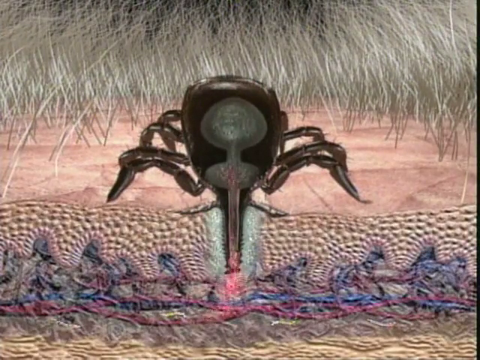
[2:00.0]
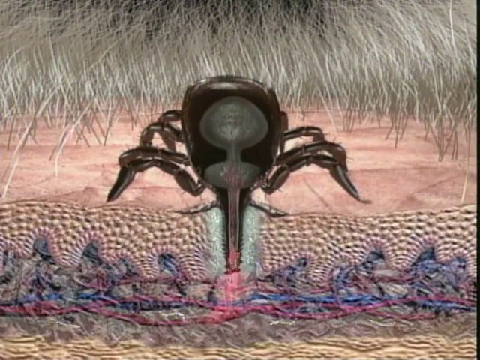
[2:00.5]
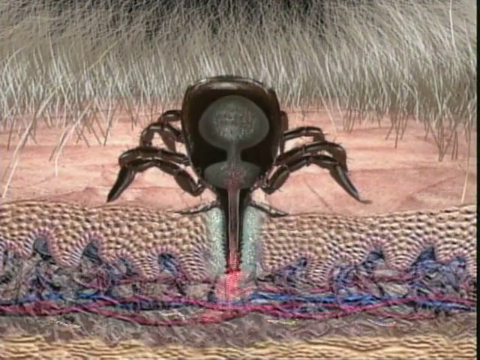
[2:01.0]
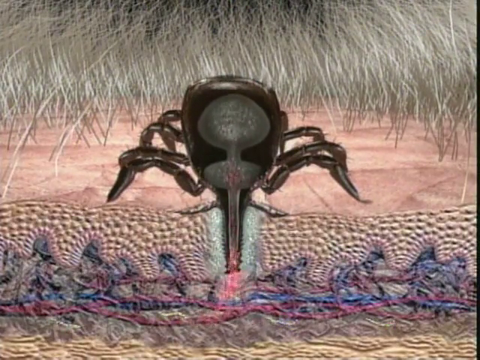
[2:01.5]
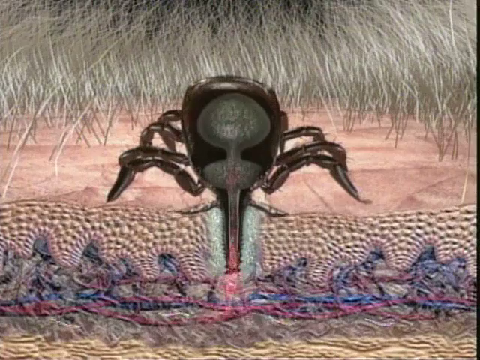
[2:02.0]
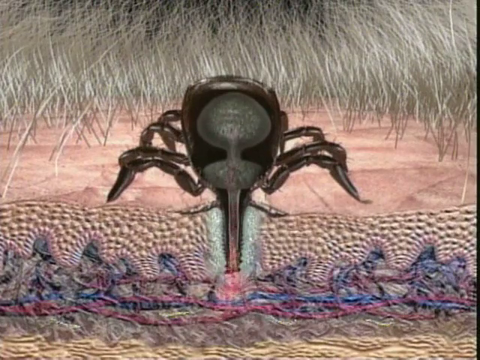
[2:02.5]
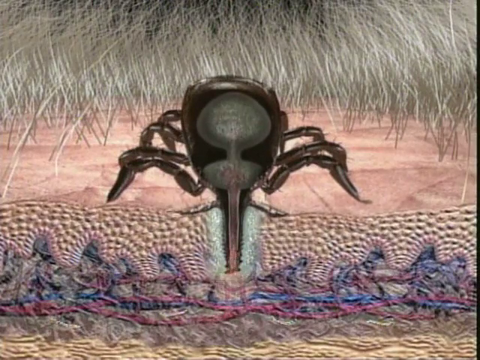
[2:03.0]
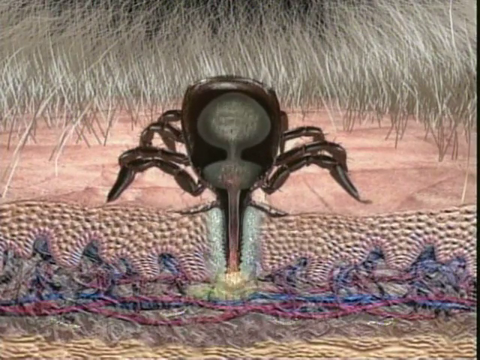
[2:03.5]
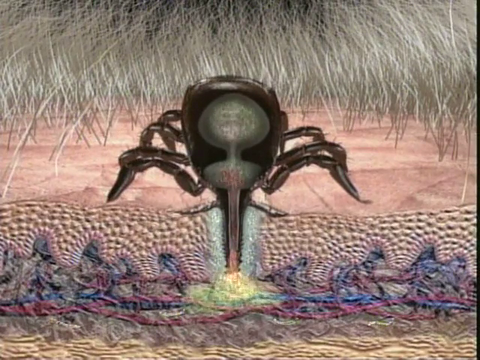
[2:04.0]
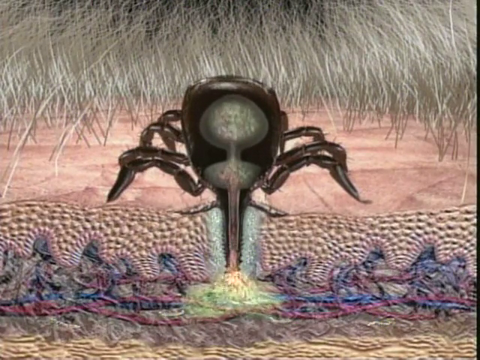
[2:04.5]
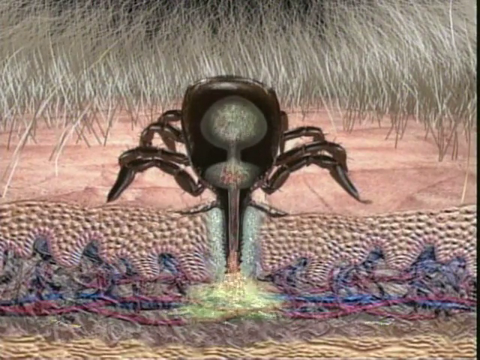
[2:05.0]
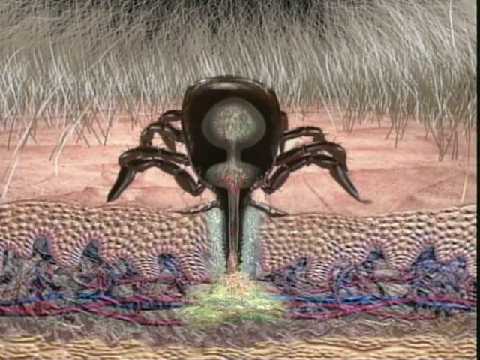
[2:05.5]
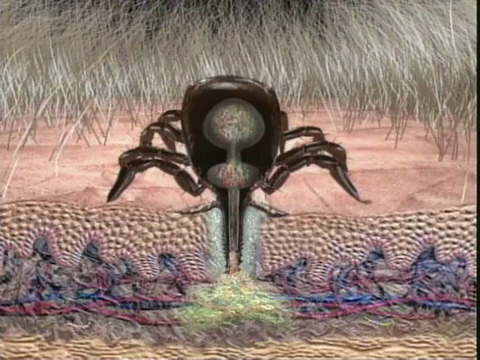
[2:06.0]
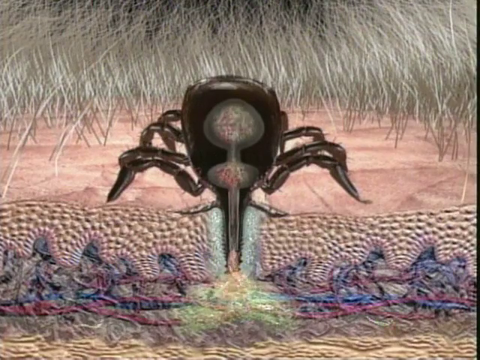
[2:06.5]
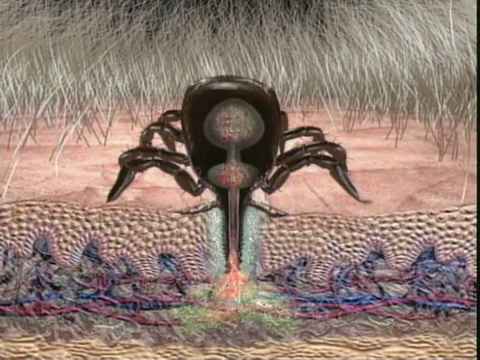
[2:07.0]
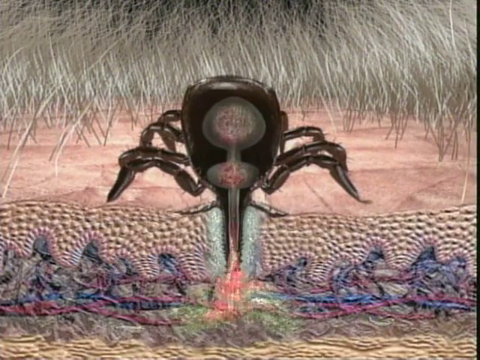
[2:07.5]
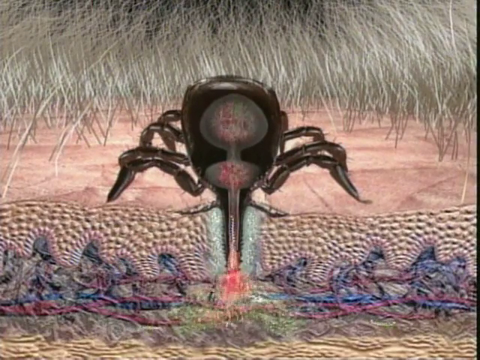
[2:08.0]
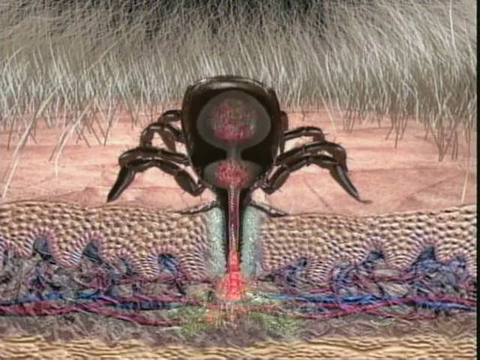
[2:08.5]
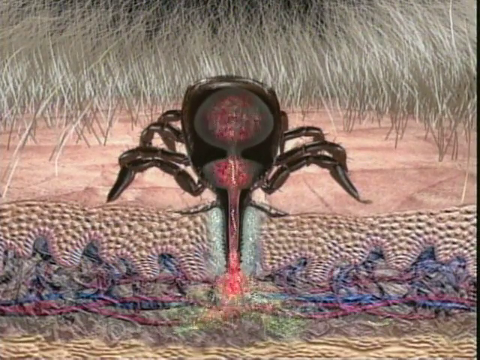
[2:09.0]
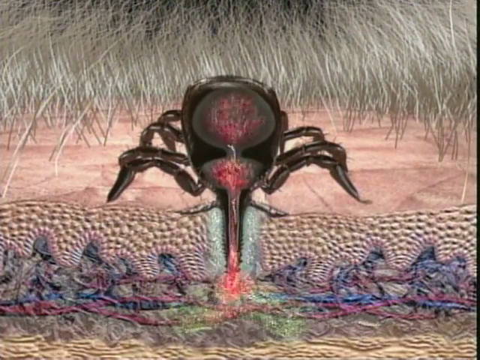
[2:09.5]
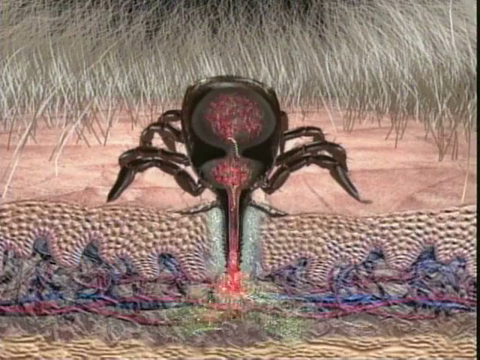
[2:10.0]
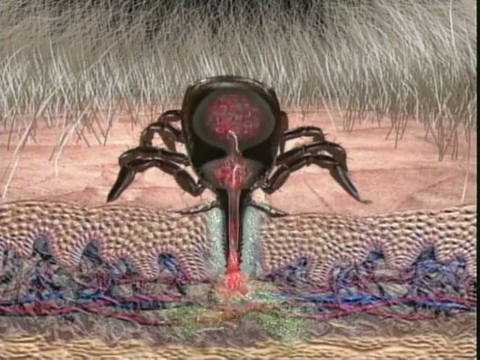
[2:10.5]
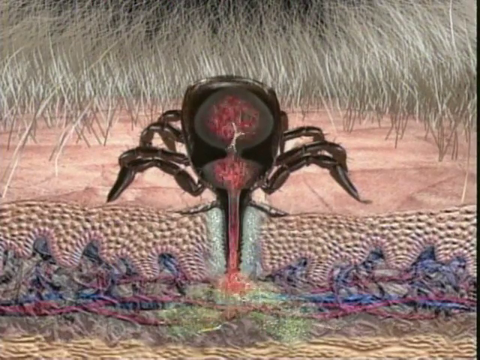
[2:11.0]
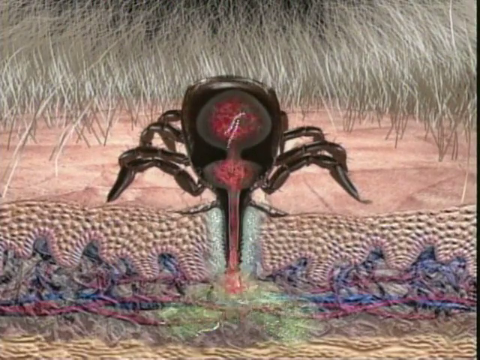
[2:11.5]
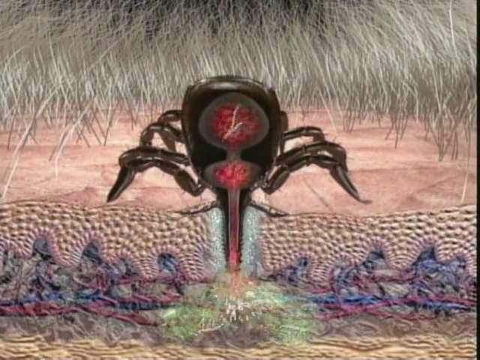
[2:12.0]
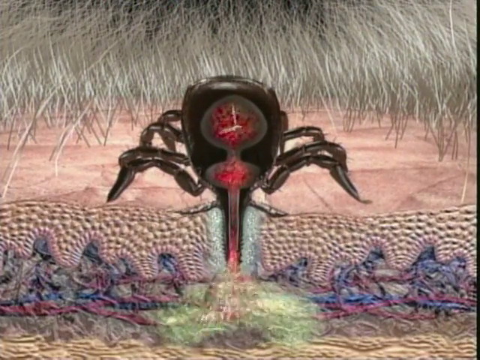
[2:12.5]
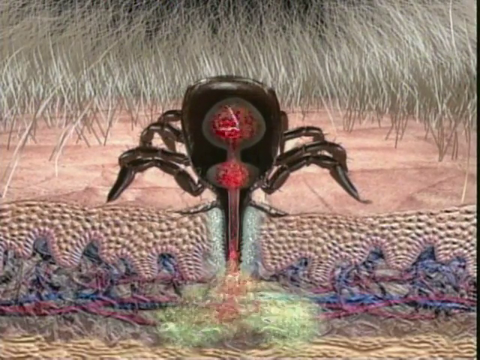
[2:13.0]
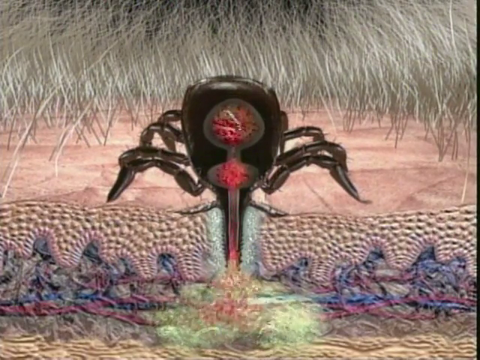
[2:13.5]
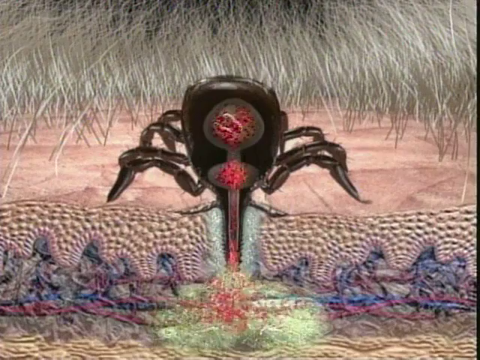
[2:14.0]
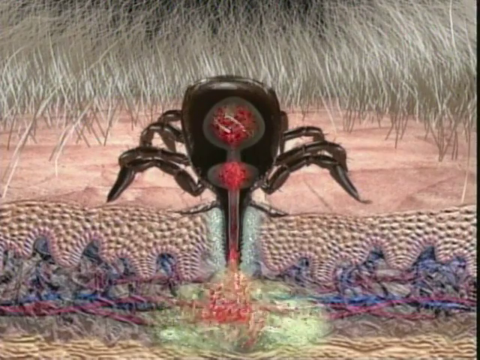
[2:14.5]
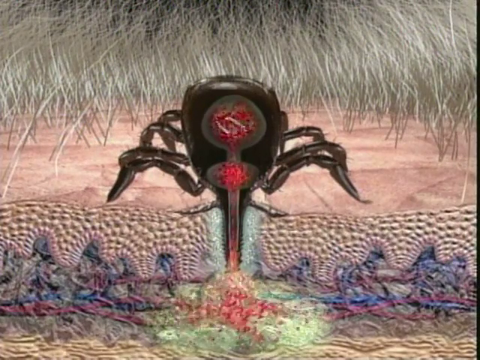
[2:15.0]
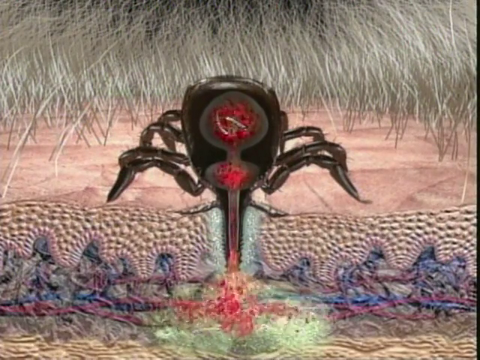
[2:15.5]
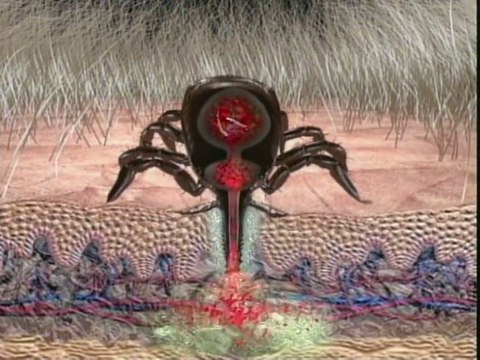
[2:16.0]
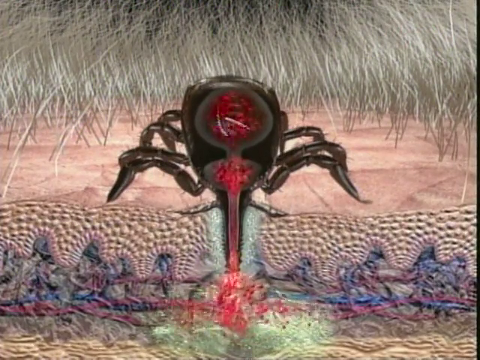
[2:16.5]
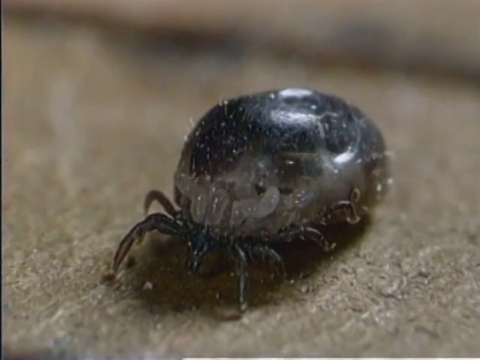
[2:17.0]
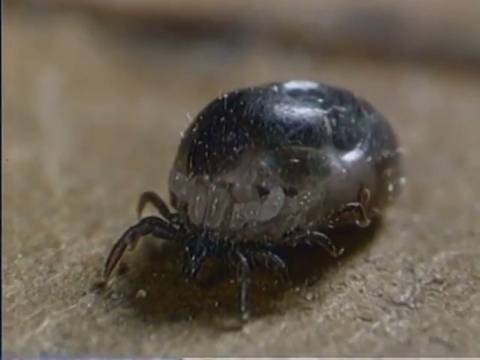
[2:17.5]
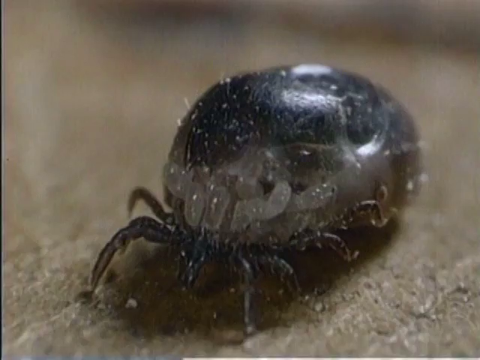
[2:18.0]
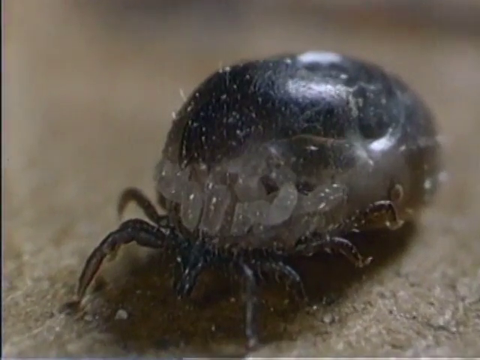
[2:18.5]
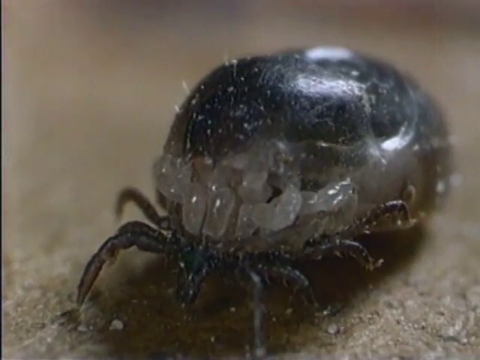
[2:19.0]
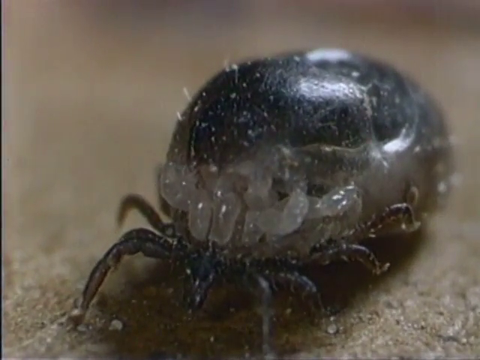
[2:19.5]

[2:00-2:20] An animated diagram-like drawing shows a tick drawing blood from a host. Its head has pierced the skin of the host, with its proboscis down pulling blood out of a vein and funneling it into its body, and its abdomen grows bigger in the animation. Apparently some infection that can get into the host is shown as well. The animation shows the flows as the tick draws blood. Then a very bloated tick is on a host, enlarged and gorged full of blood from feeding. It is very fat for a tick and can barely walk because it is so swollen; its legs look small compared to its massive abdomen.